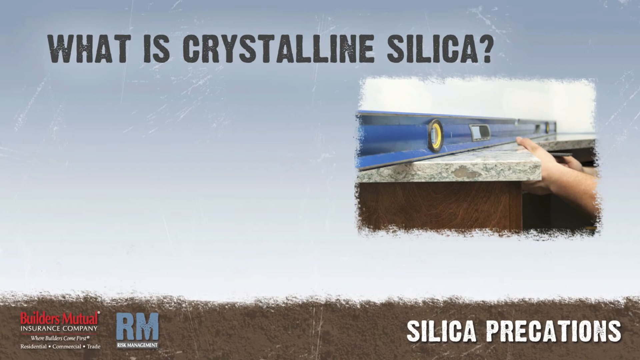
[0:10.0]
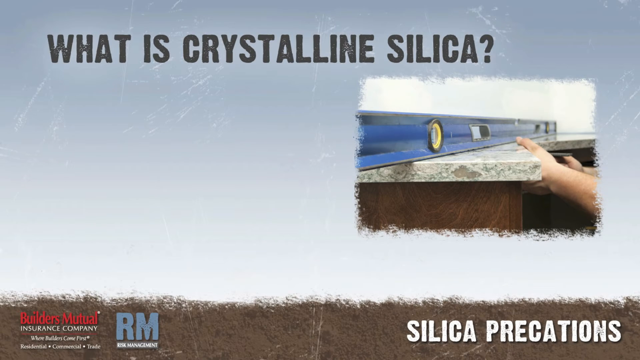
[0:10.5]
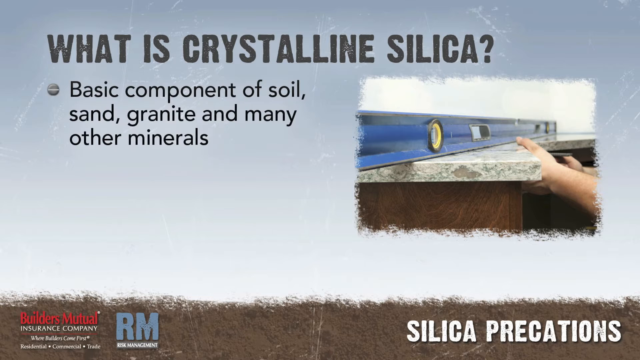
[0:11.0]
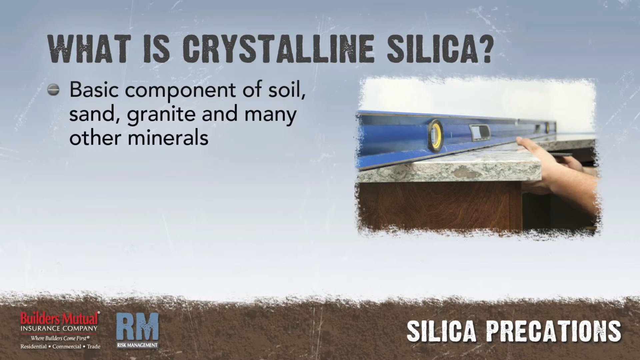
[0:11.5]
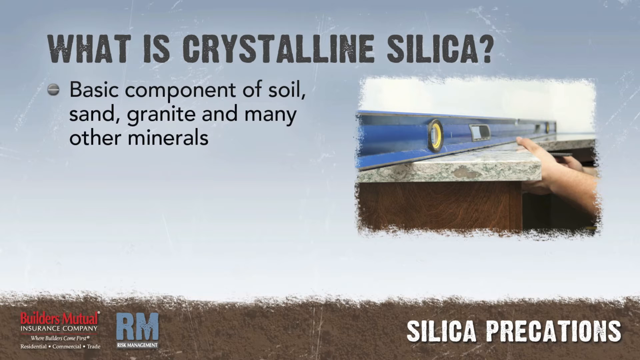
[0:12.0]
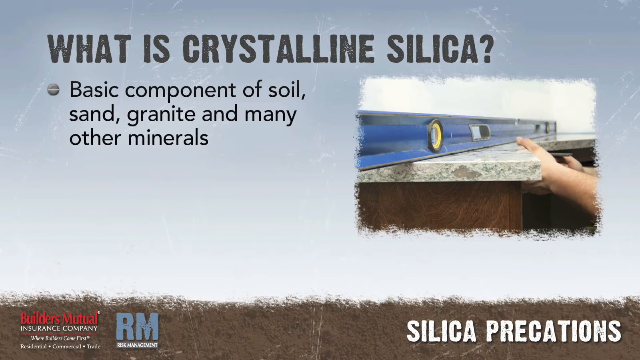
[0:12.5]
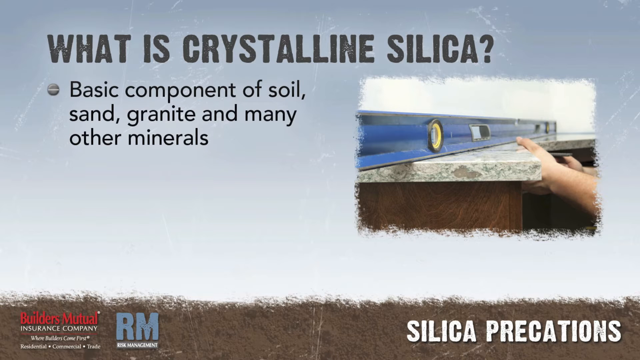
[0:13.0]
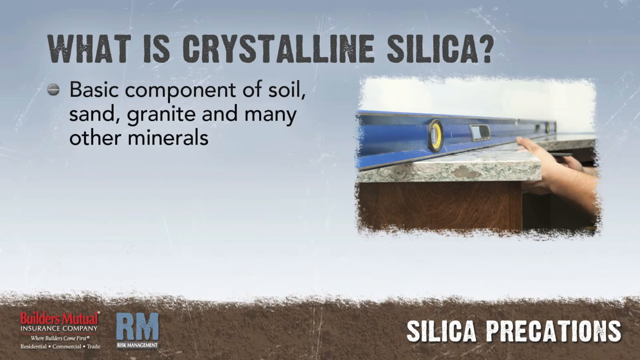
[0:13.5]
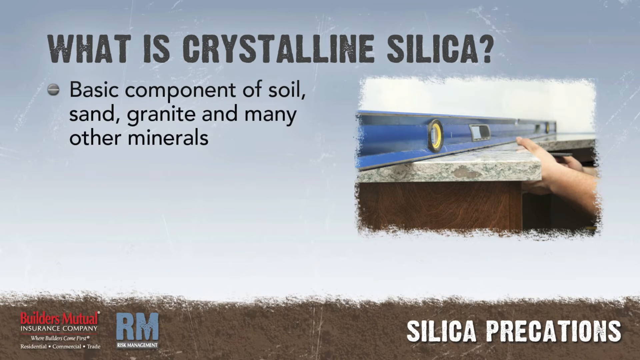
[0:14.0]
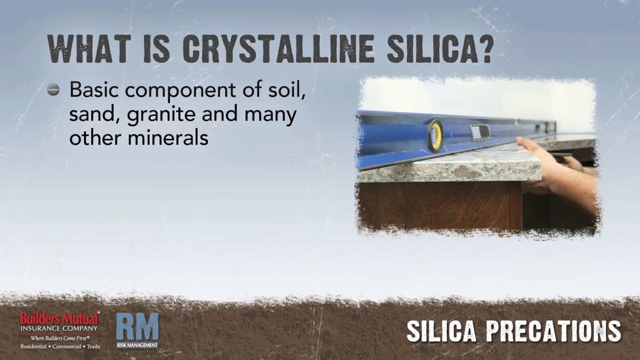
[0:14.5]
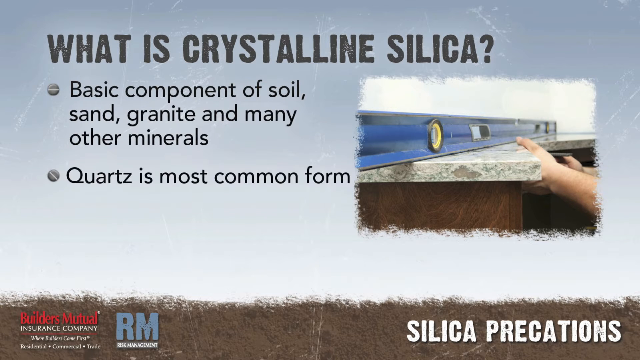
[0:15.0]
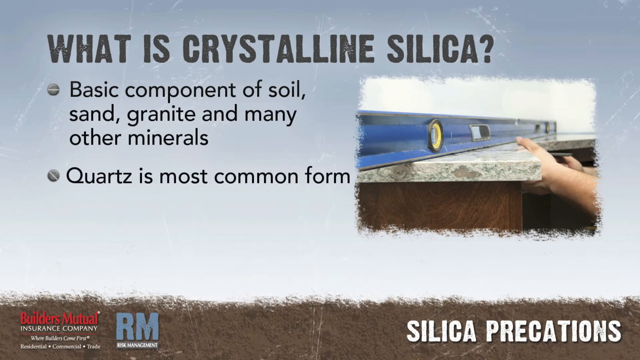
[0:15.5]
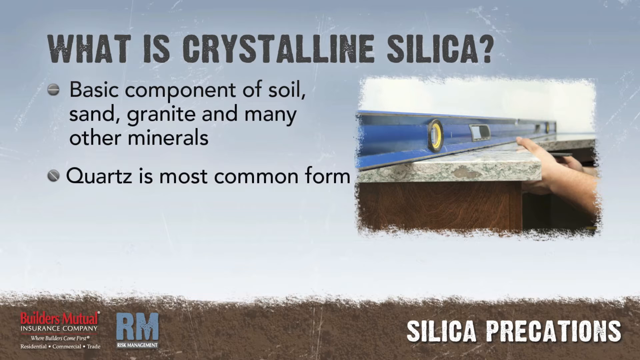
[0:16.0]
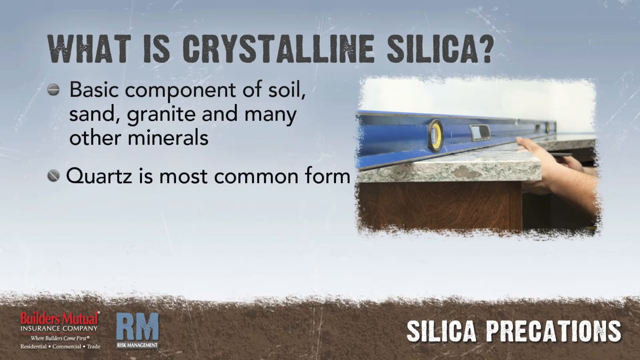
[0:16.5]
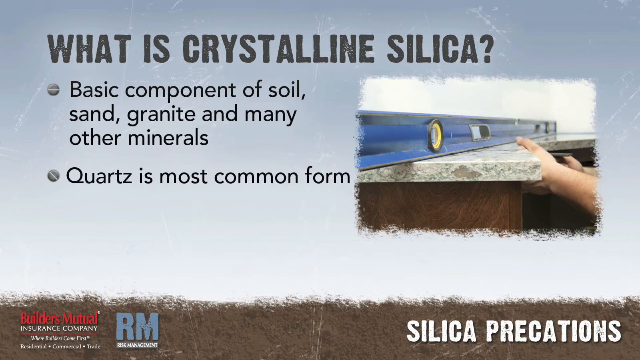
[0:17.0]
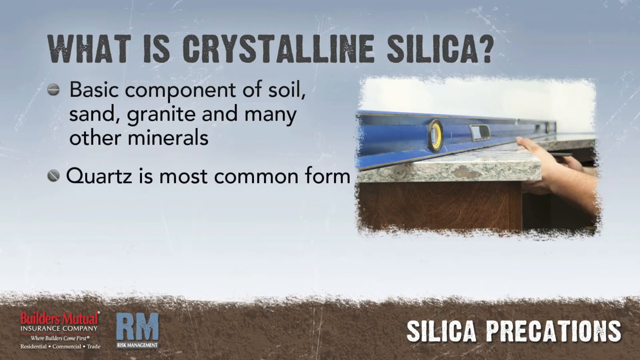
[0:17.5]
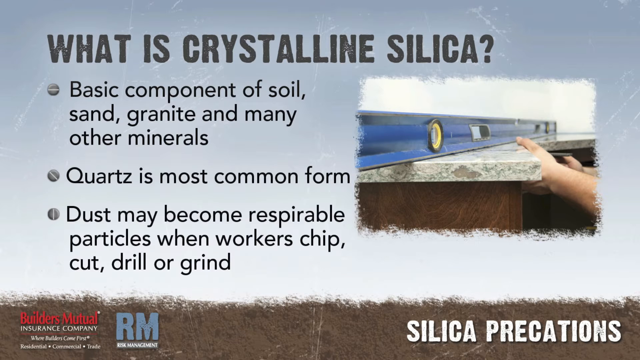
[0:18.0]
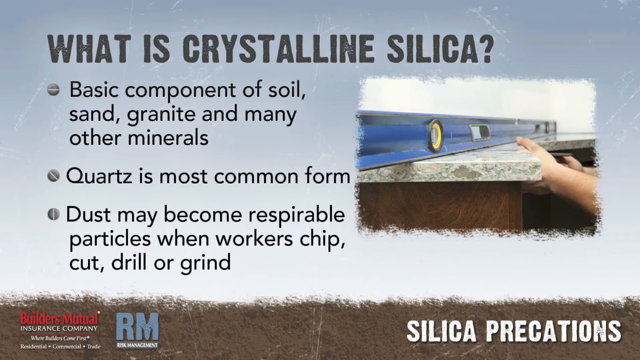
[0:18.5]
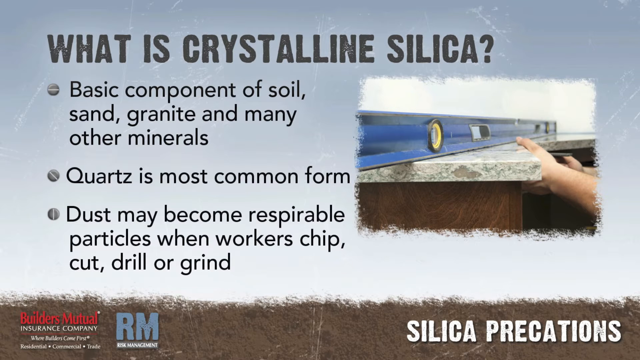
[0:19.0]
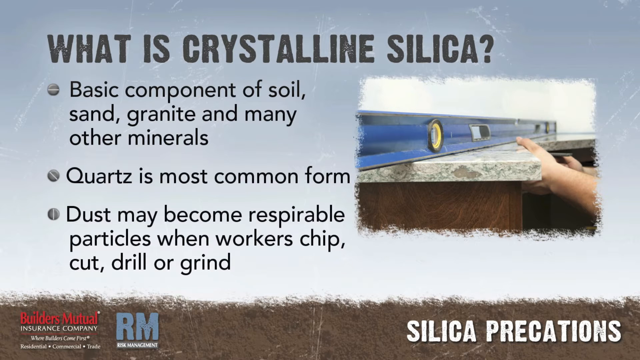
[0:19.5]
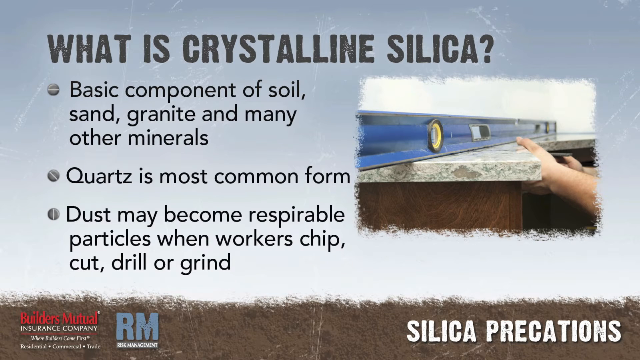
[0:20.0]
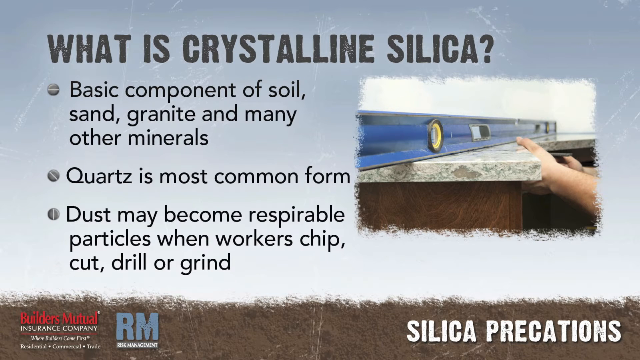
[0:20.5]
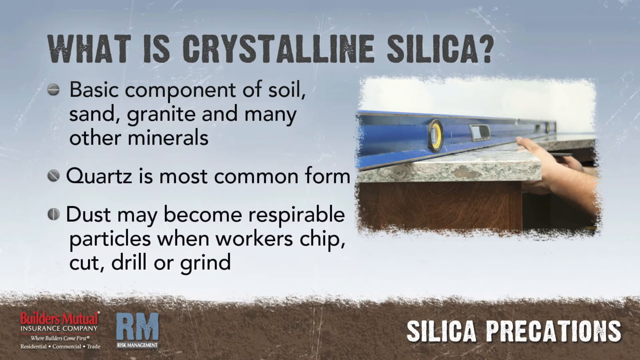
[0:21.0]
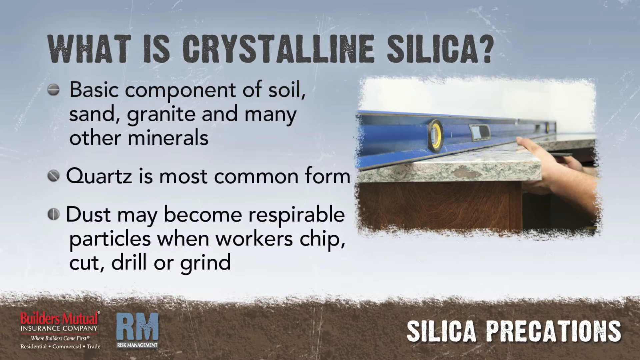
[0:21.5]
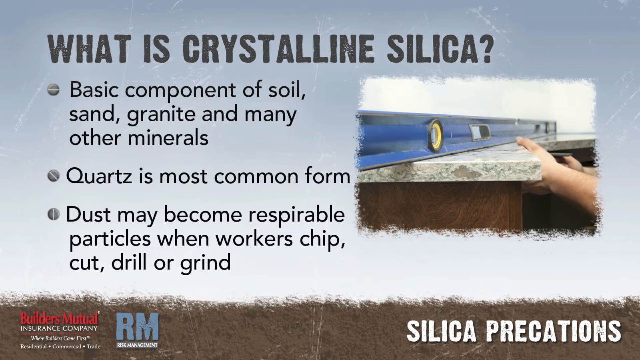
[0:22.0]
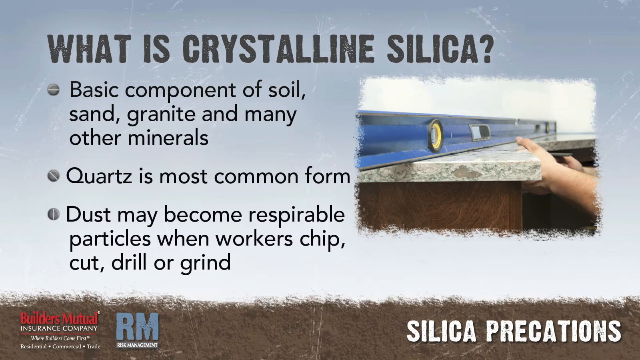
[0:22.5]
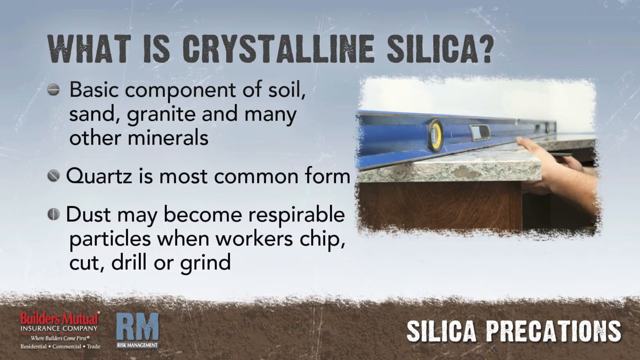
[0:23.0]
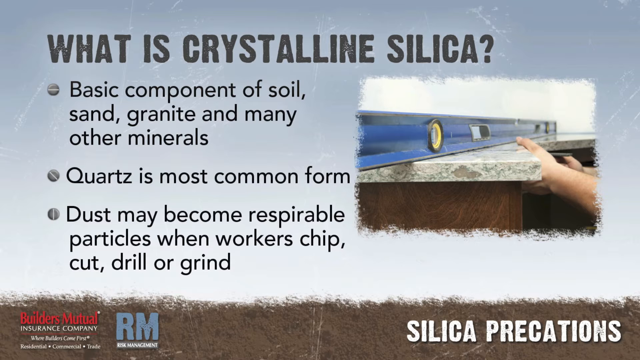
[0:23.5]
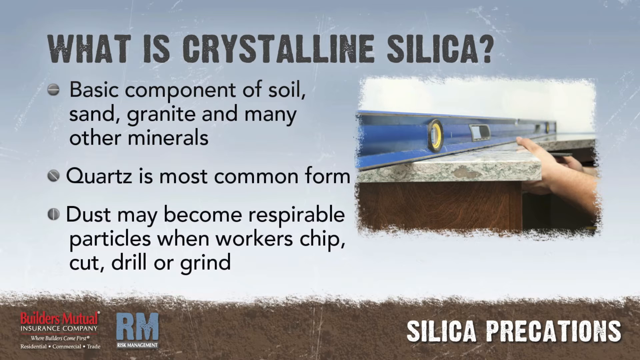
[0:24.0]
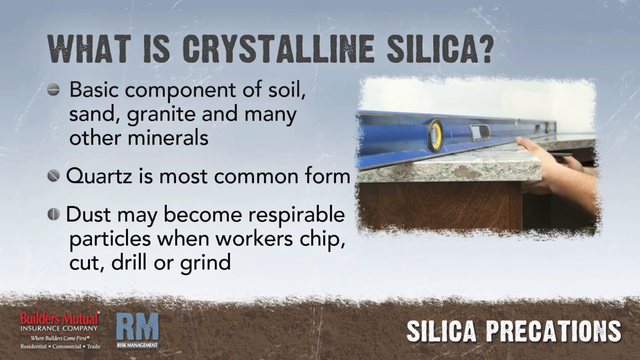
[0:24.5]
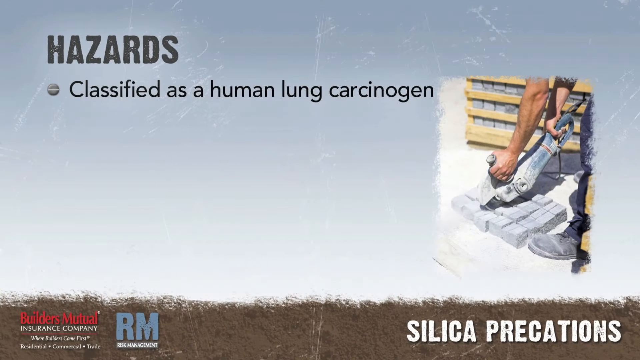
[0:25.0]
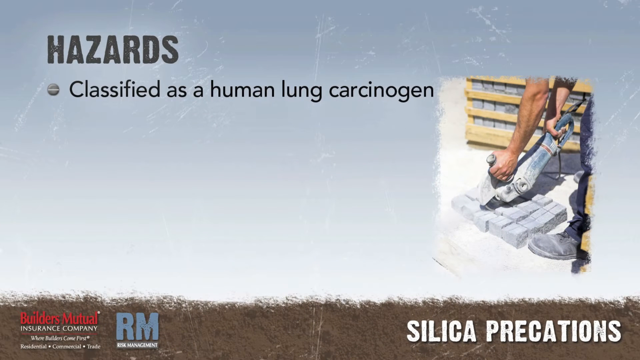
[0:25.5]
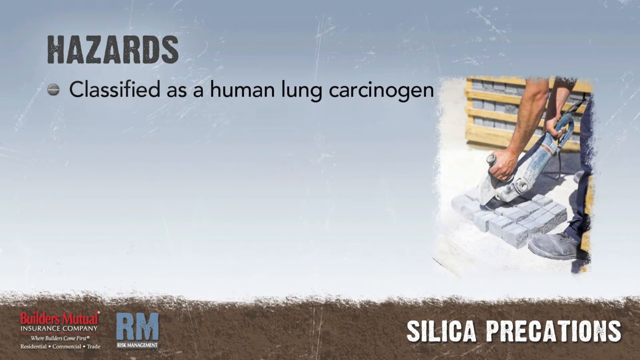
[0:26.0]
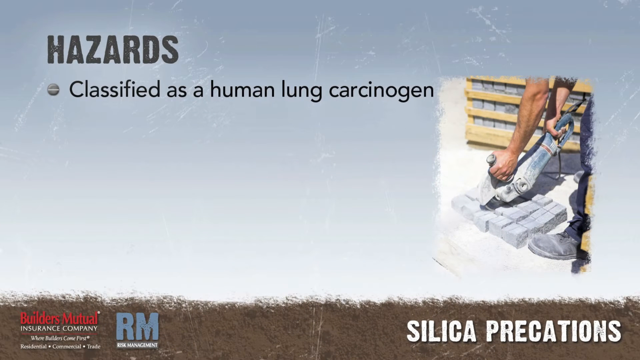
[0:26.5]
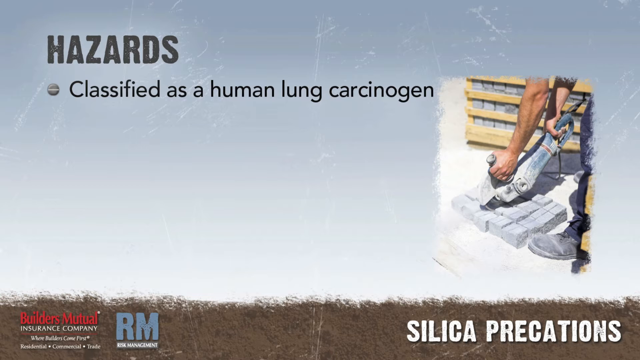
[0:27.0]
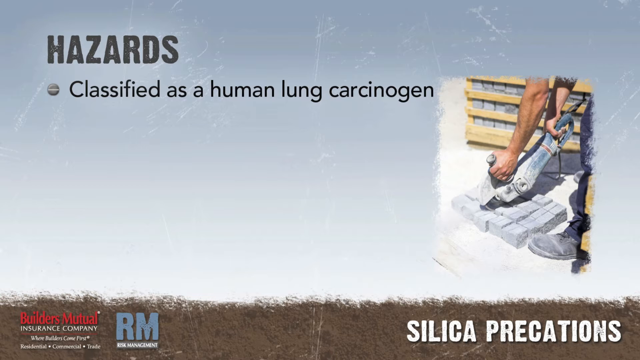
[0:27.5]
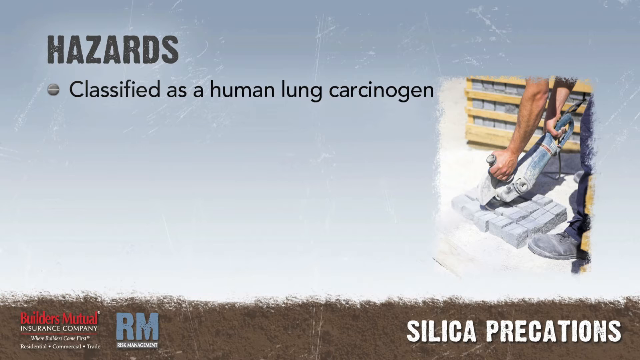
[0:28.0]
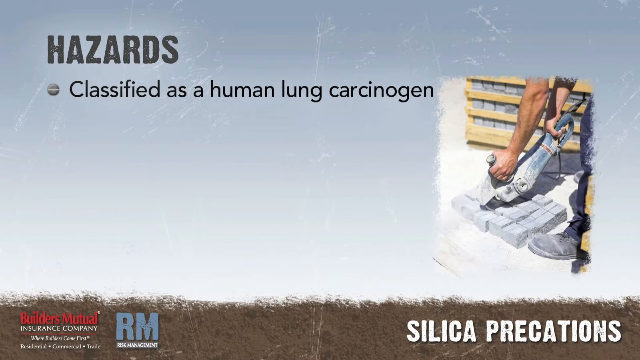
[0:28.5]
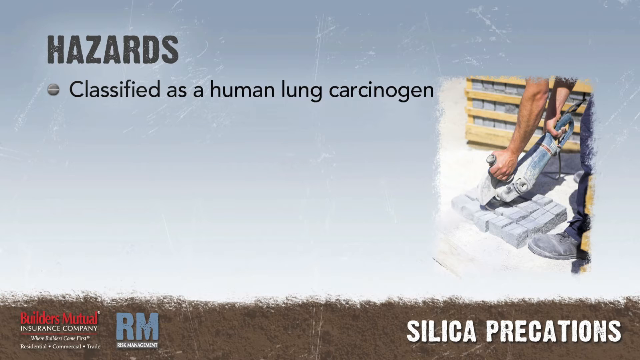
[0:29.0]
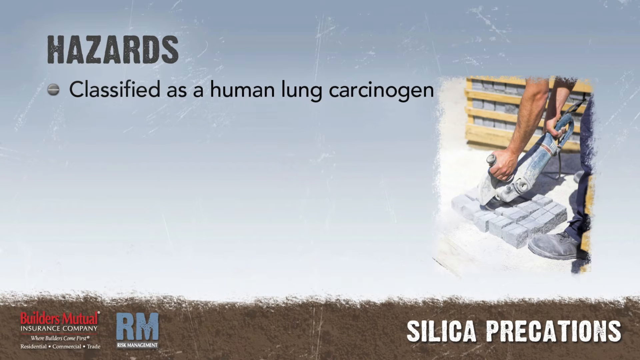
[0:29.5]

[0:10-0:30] A headline at the top reads "What is crystalline silica?" Below it on the left, bullet points appear one by one: "Basic component of soil, sand, granite, and many other minerals", then "Quartz is most common form", then "Dust may become respirable particles when workers chip, cut, drill, or grind." To the right of the three bullet points is some sort of blue measuring device, a level or balance-type measuring device, on top of a counter, with two hands to the right that look like they are holding up the counter as they balance the device on it. The scene changes to another set of information with the headline "Hazards" at the top left, and a first bullet point underneath reads "Classified as a human lung carcinogen."